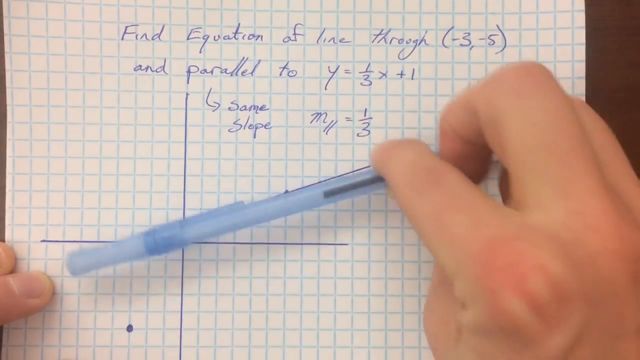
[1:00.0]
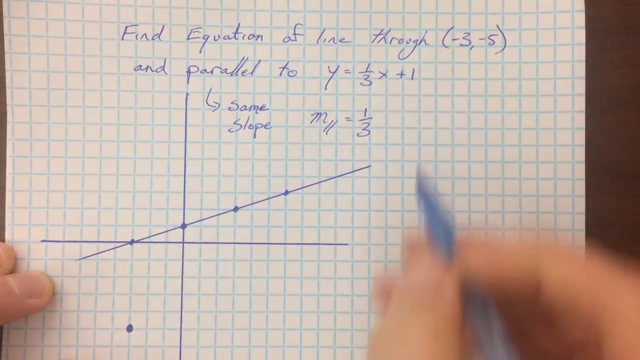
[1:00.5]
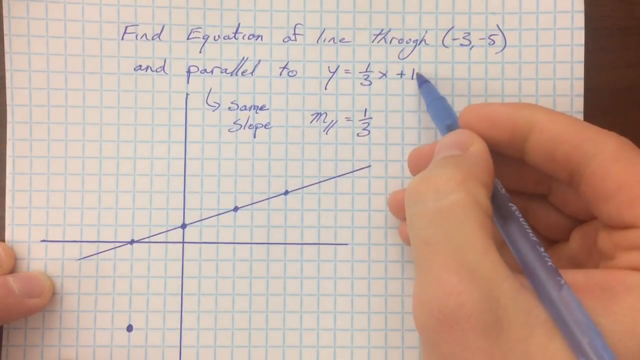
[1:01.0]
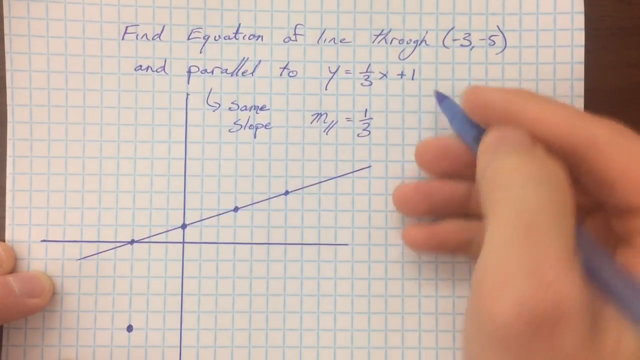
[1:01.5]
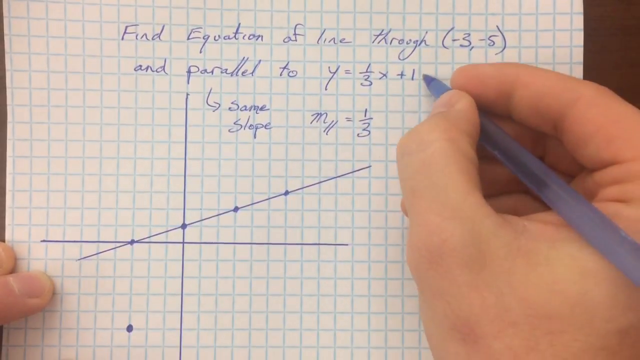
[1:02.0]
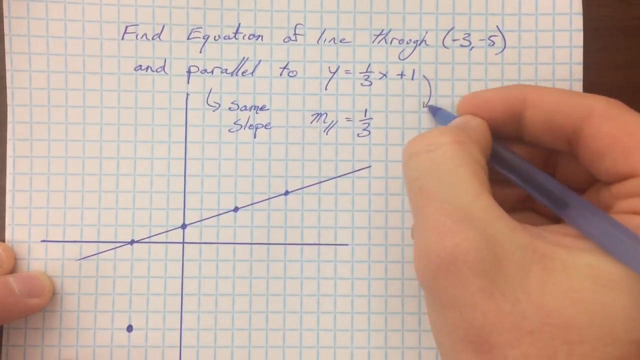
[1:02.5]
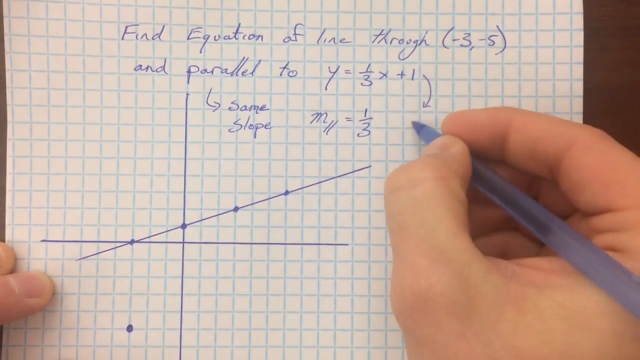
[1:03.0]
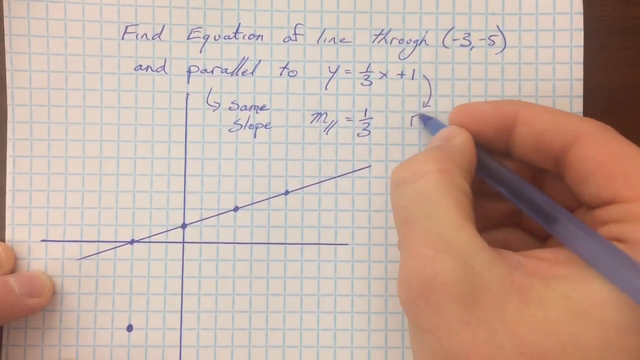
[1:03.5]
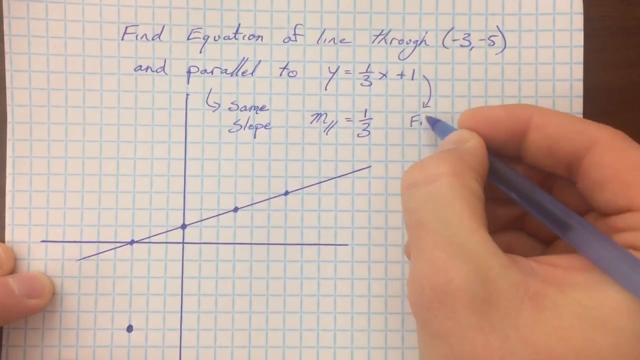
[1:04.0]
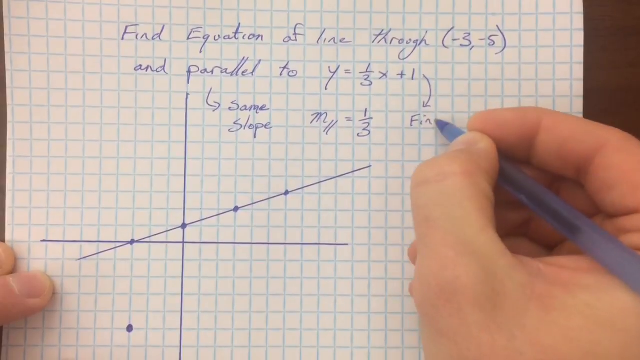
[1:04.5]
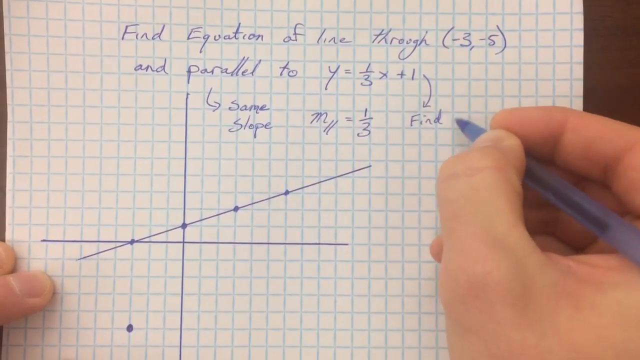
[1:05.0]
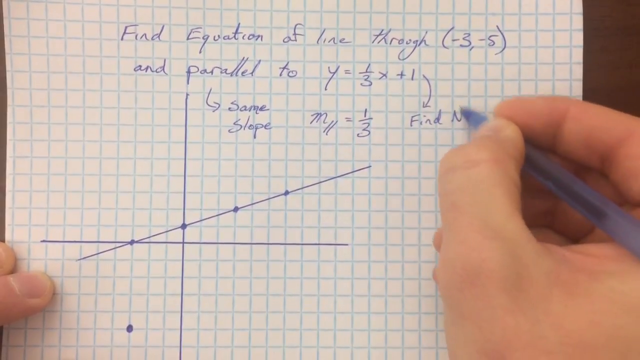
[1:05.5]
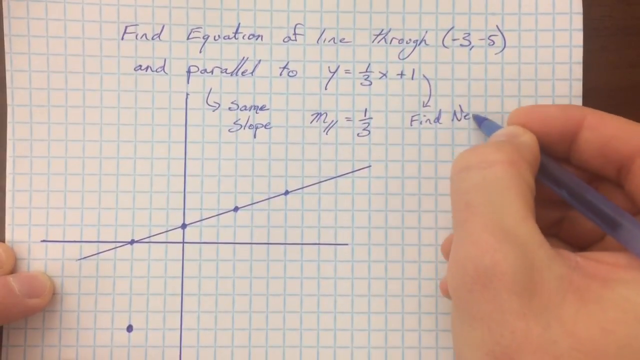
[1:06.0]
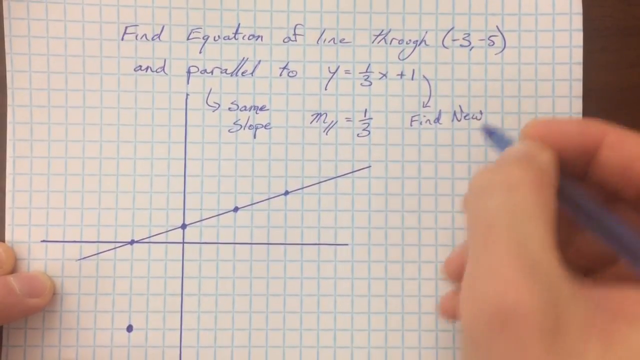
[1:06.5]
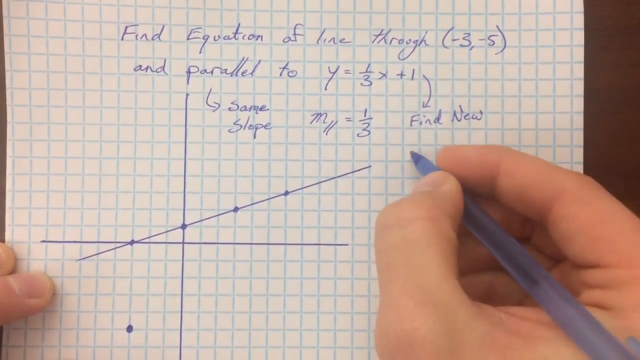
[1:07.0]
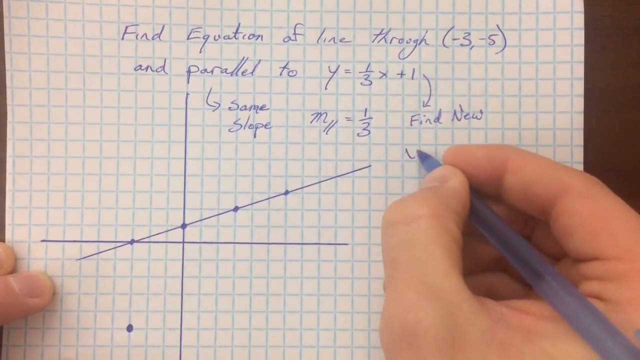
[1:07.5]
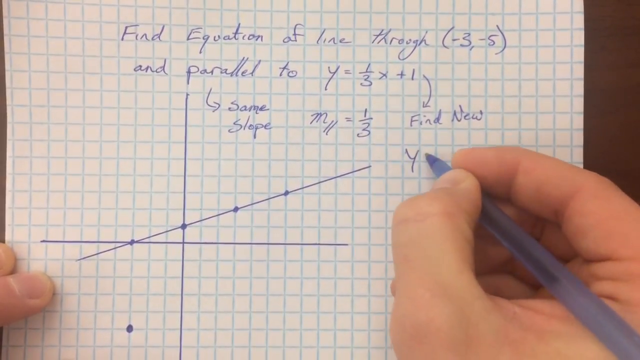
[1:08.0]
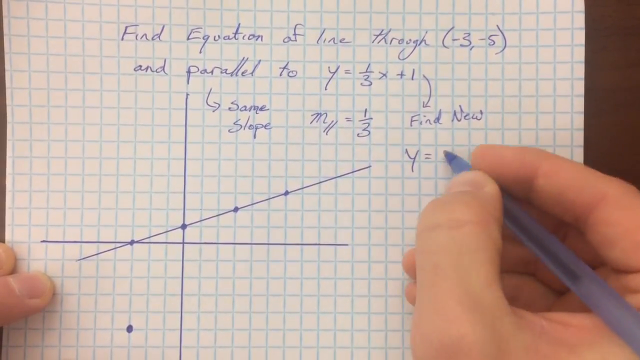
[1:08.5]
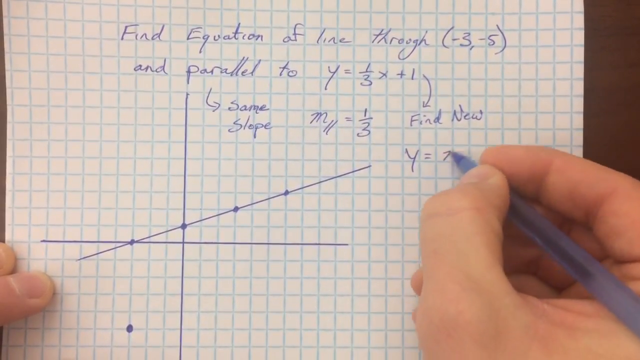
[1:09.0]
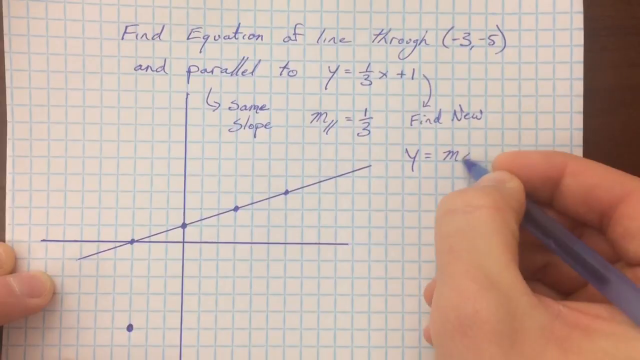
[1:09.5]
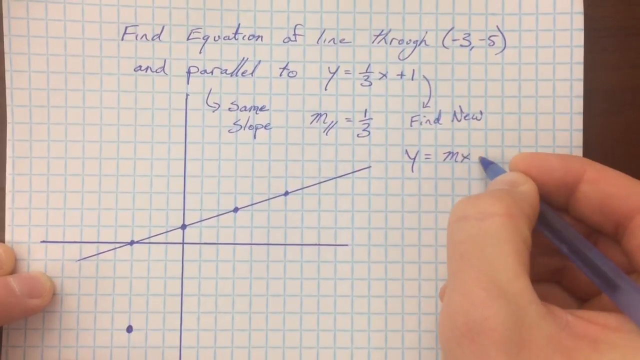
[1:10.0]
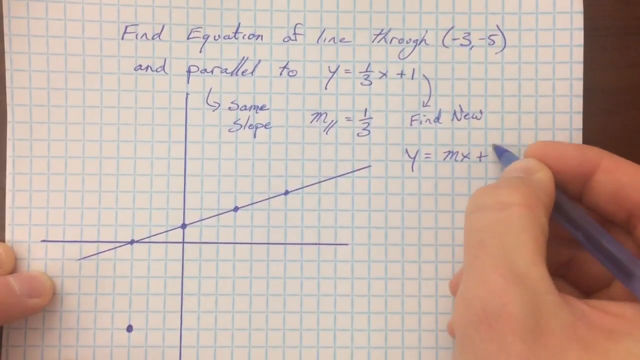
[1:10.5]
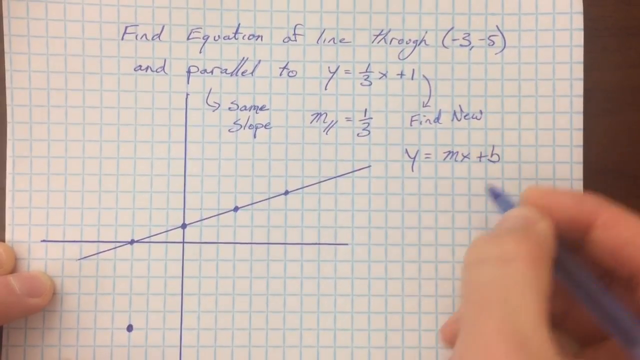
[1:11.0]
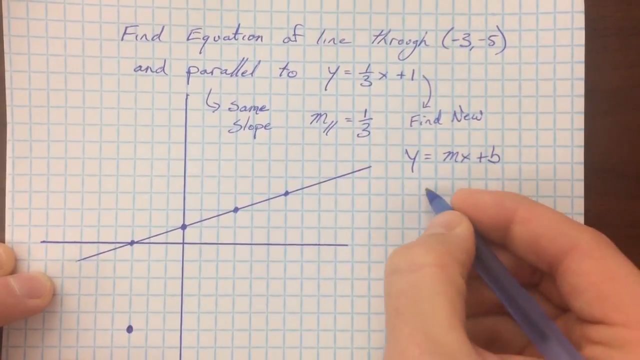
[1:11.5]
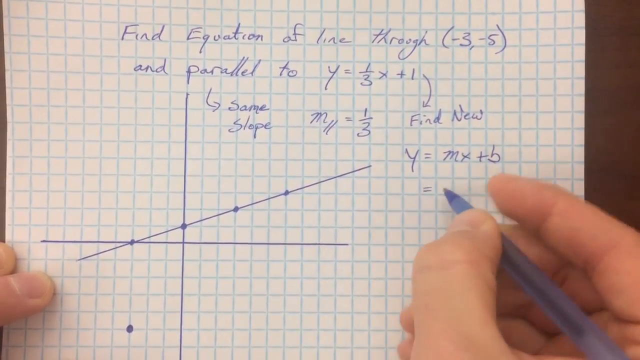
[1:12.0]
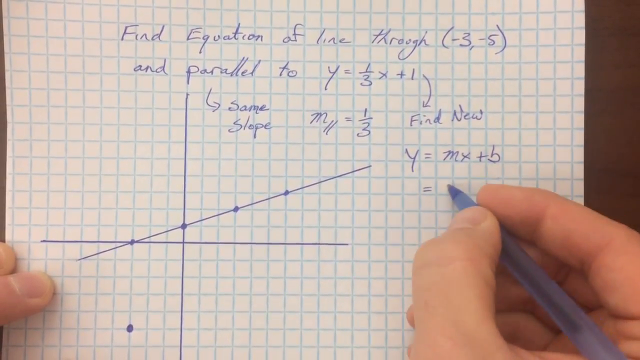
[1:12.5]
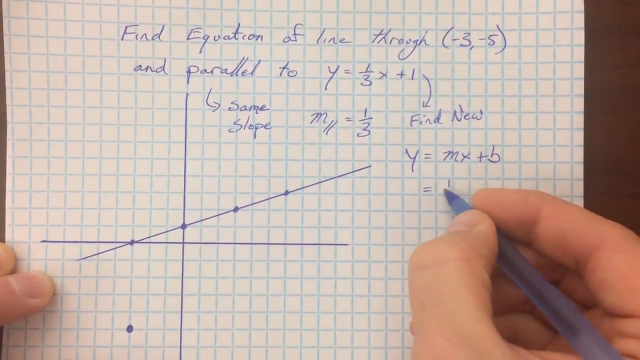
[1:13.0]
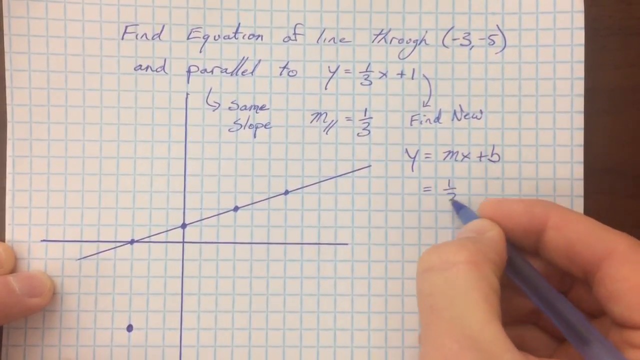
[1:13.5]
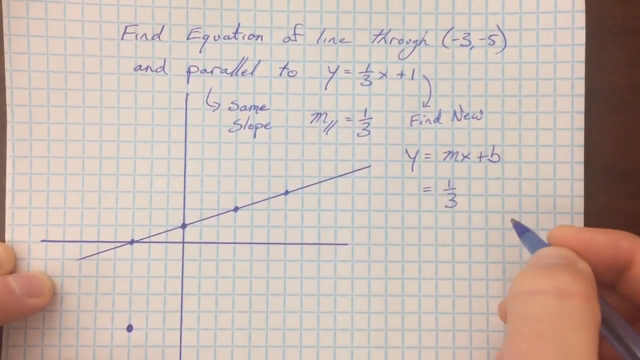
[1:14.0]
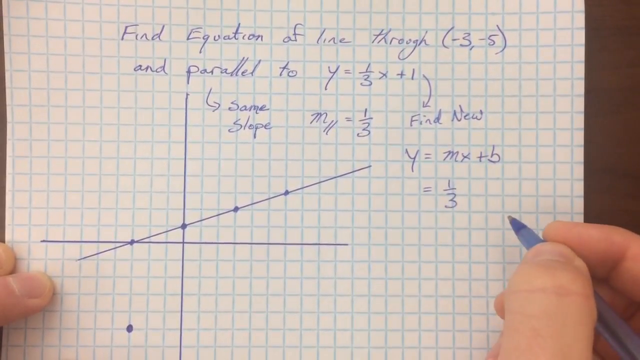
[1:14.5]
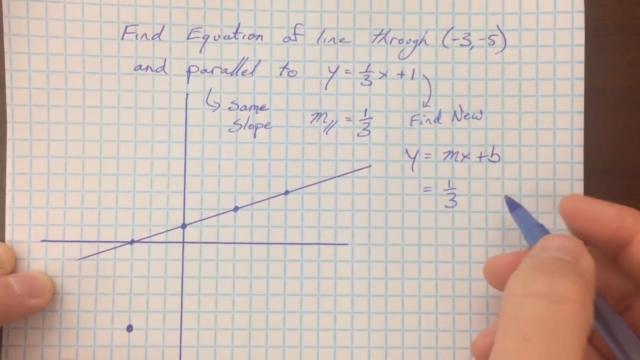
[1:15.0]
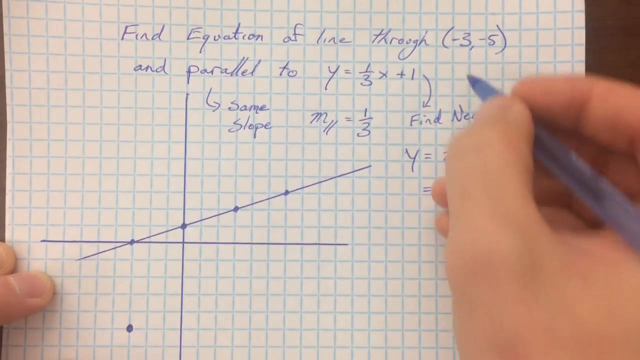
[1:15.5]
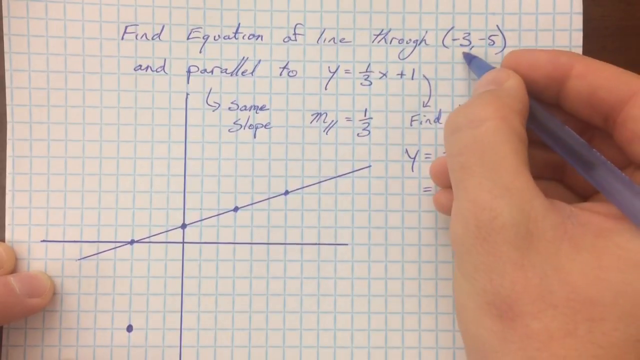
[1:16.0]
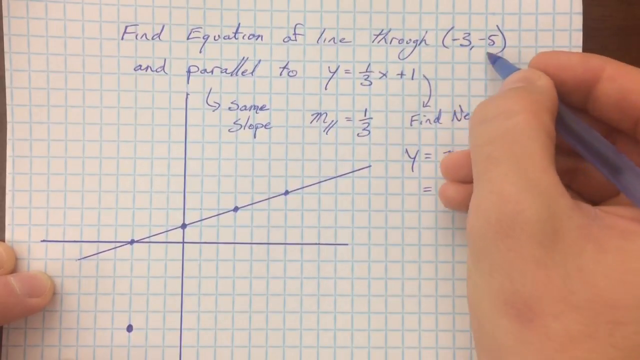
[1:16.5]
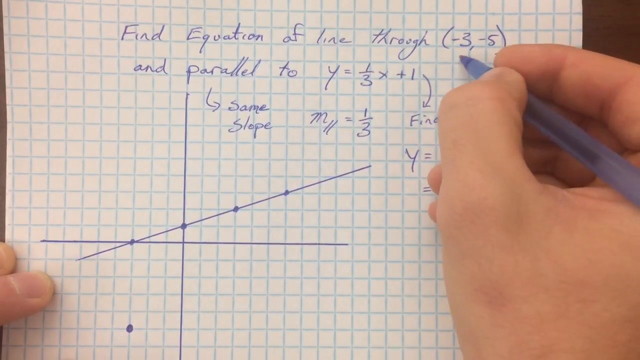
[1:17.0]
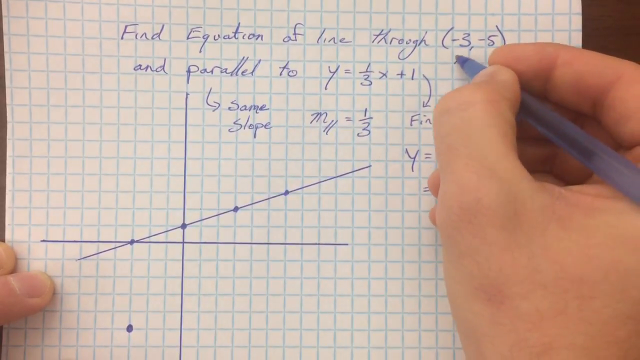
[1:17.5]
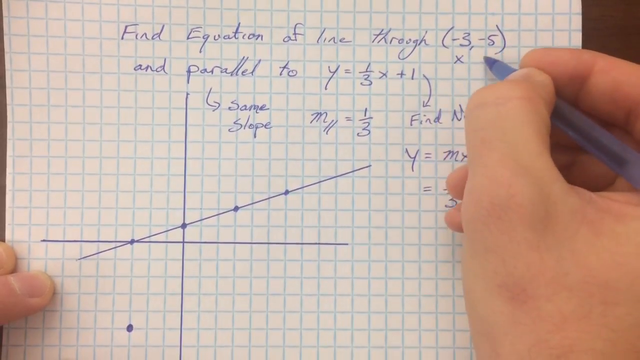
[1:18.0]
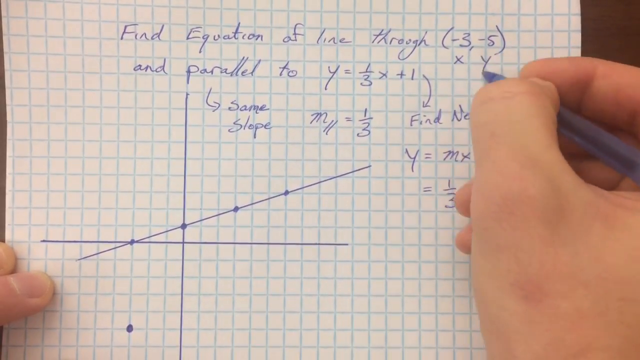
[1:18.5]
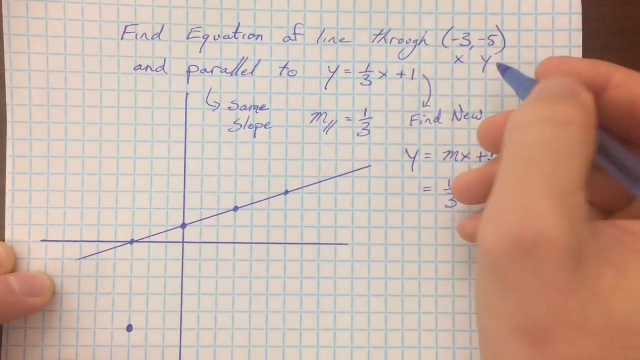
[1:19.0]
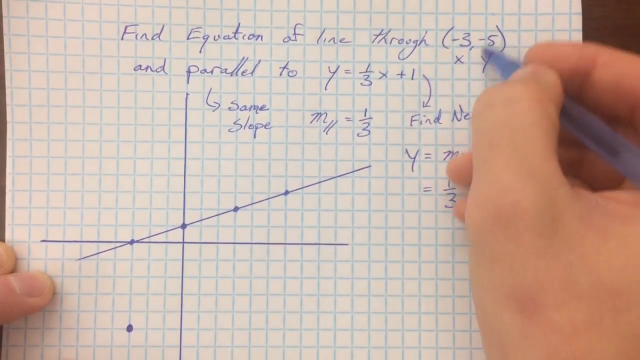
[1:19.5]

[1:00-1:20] The person compares the line already drawn with the line that is going to be drawn and points at the equation y = 1/3x + 1. He draws an arrow from the 1 at the end of the equation and writes "find new". He then writes y = mx + b and that it equals one third. Next he points at the coordinates -3 and -5 from the problem and assigns them, with -3 as x and -5 as y.